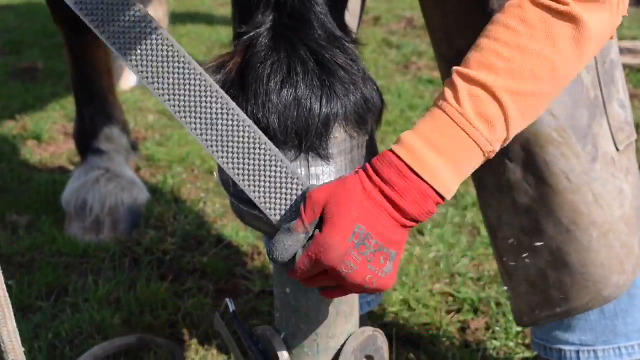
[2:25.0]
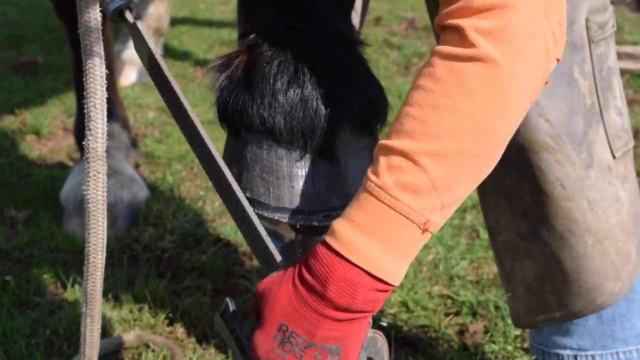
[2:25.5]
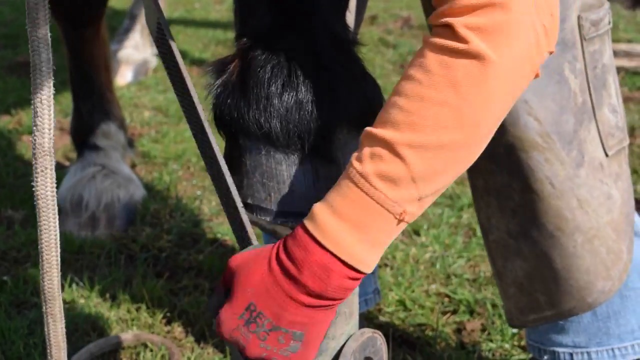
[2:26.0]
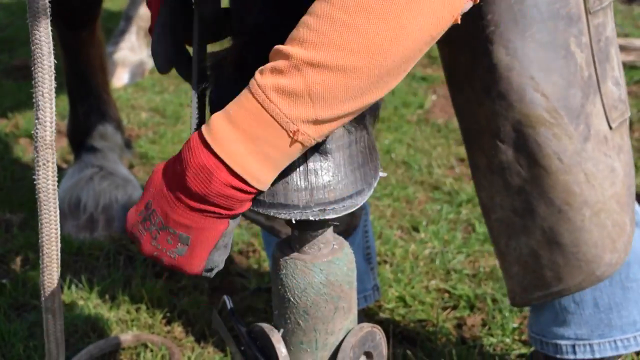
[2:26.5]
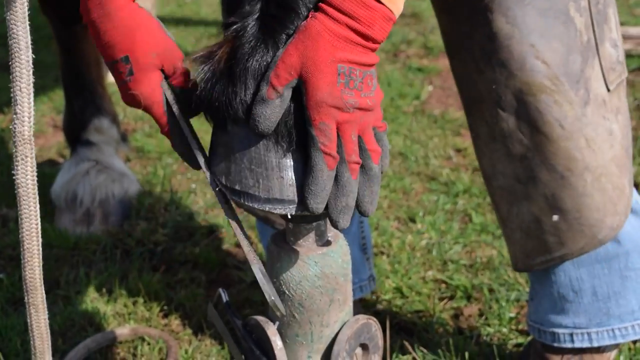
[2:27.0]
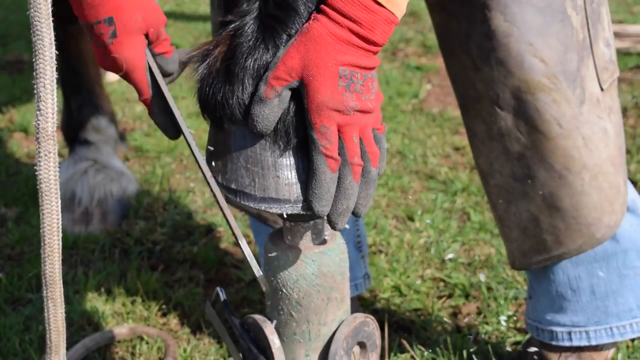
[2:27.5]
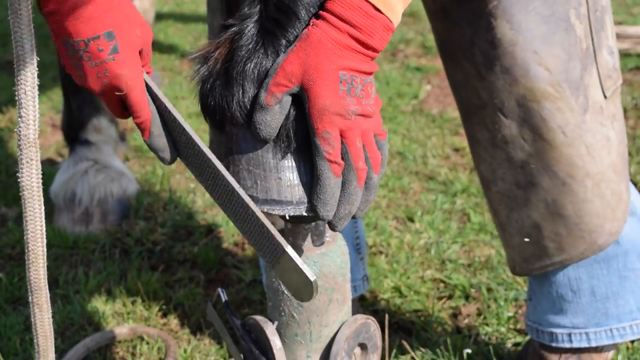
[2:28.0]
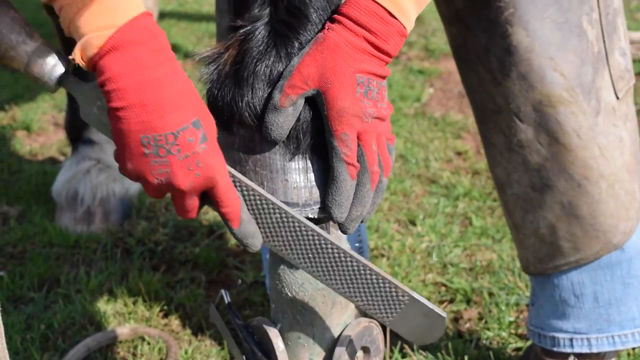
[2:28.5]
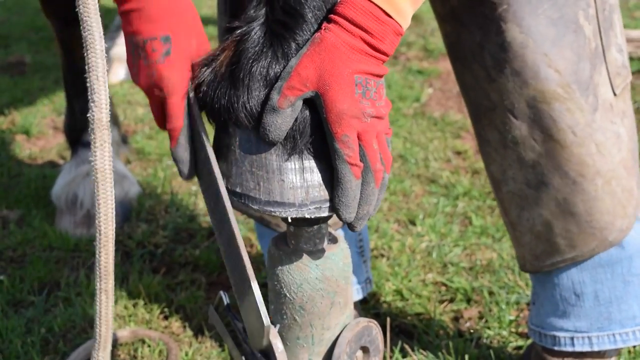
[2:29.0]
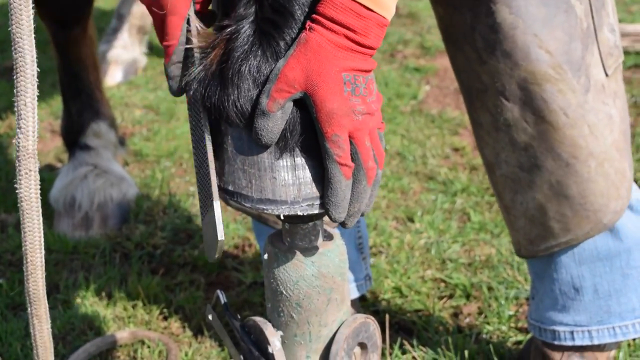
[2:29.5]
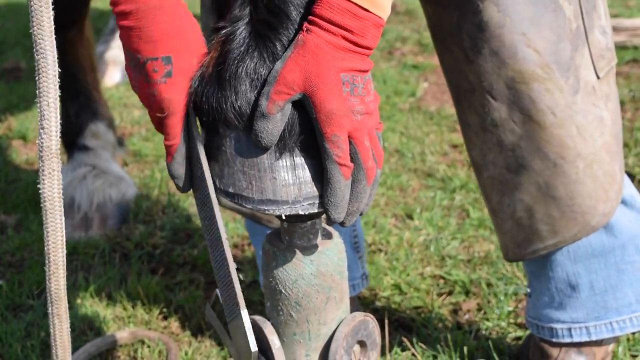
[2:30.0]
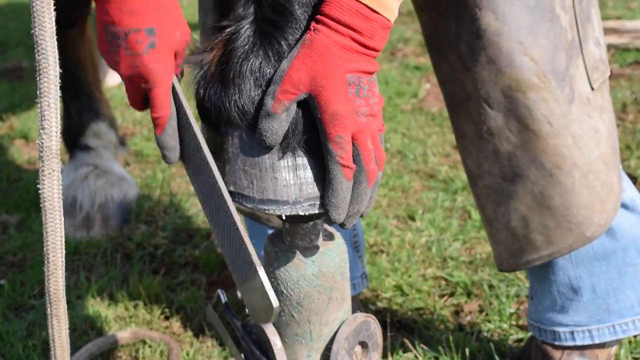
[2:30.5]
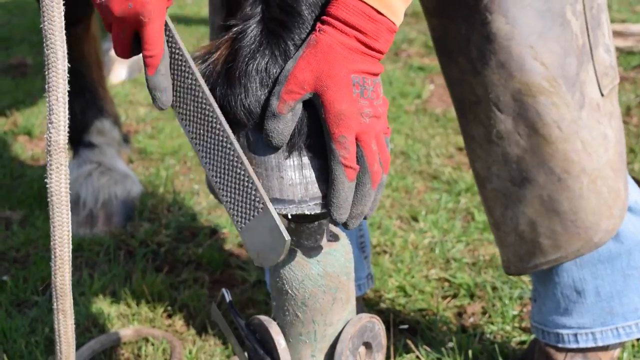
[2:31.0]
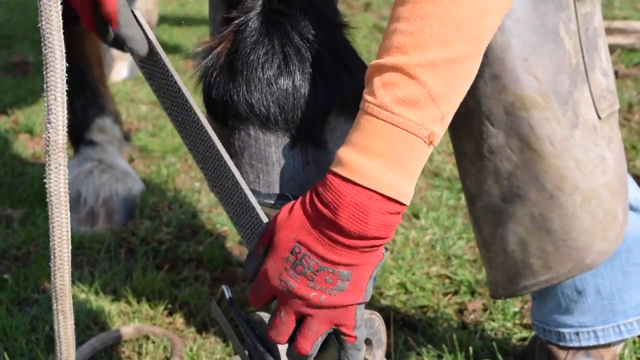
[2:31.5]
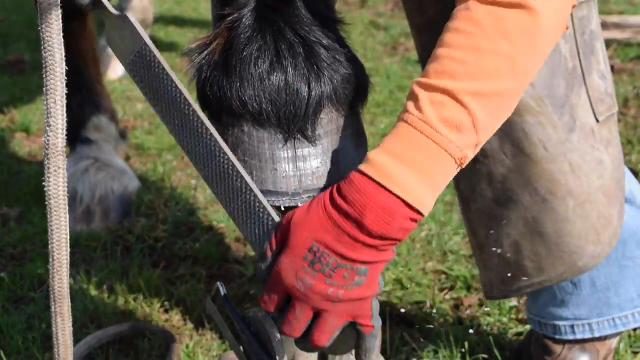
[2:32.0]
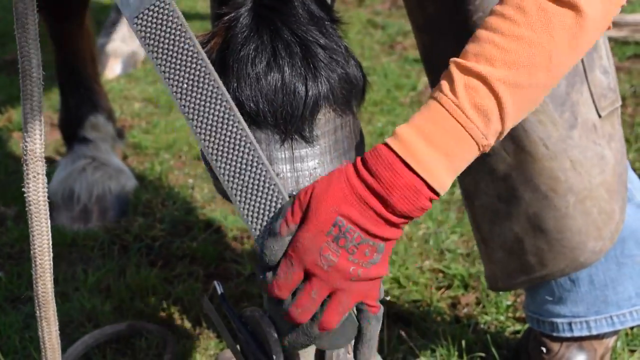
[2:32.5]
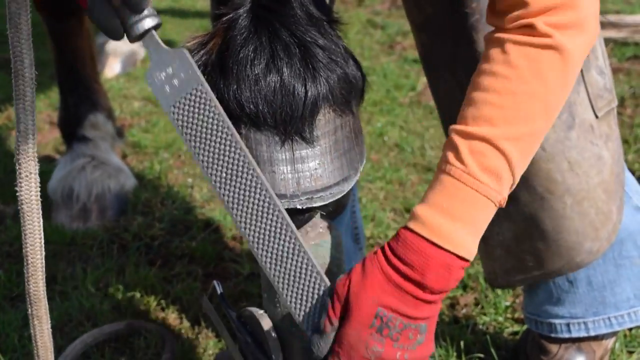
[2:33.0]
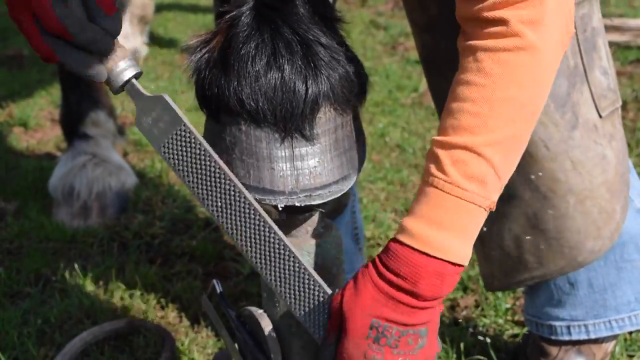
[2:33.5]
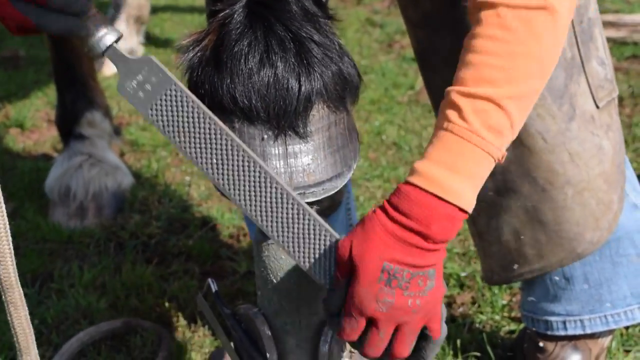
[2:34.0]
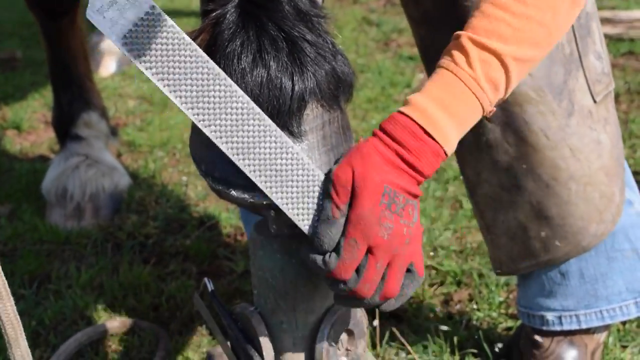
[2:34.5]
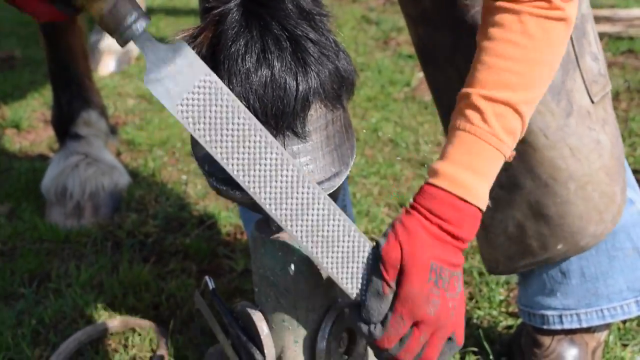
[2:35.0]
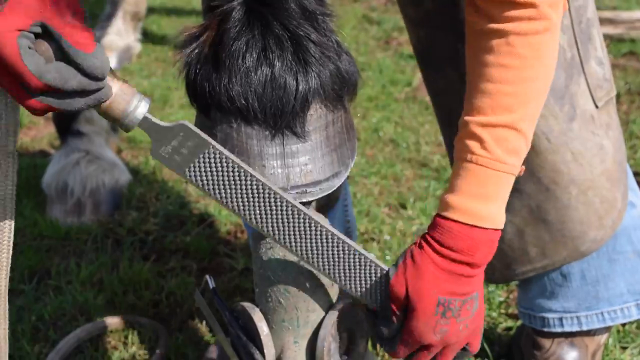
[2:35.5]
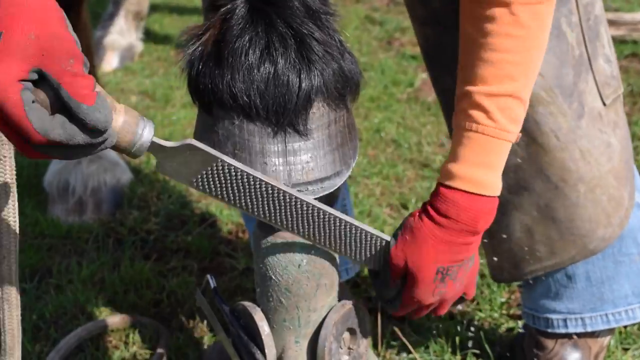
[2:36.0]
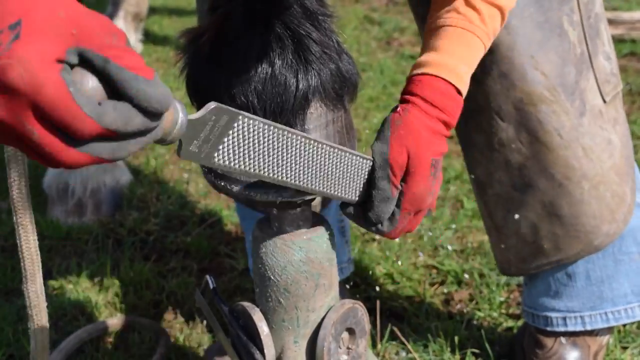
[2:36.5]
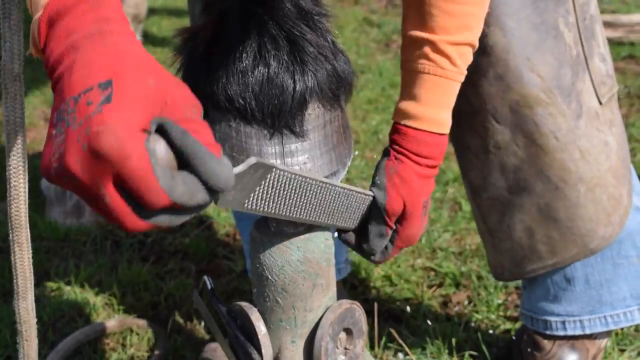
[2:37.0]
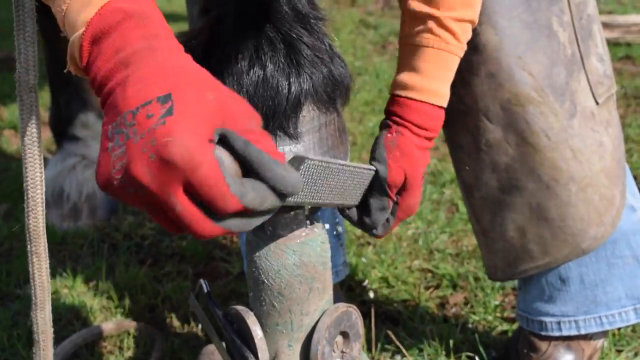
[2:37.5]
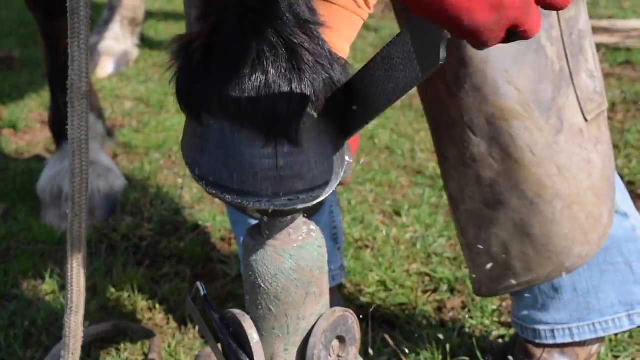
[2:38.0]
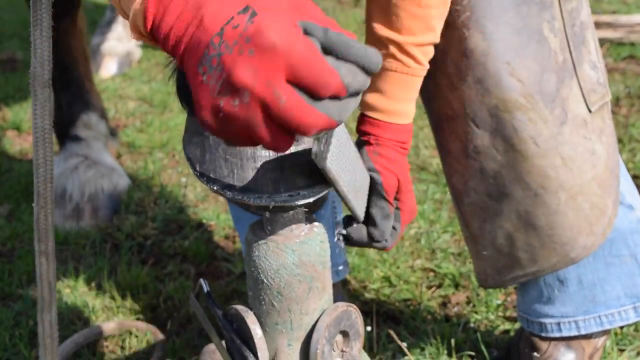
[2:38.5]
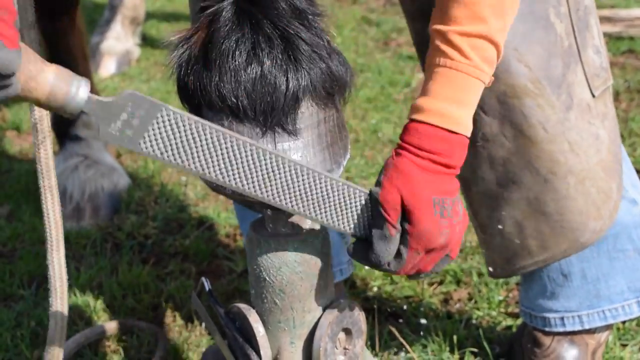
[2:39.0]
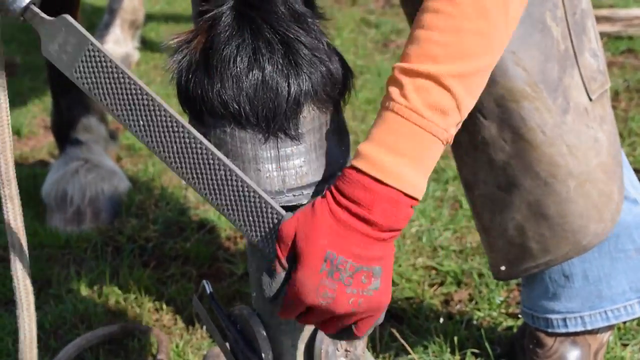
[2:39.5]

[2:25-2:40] With the horse's hoof still on top of the metal prop, she uses the same filing tool around the hoof, up and down, back and forth, side to side, maybe in a slight circular motion. She uses one hand, then switches to both hands; with one hand she seems to work a spot more vigorously, and with both she seems to slow down into a more circular motion. She takes the hoof into her left hand and files with her right while holding the hoof sturdy. The horse still has not moved. A white rope dangles from the left side, probably tying the horse up. She looks like she is wearing brown boots with her blue jeans, and the smock covers her jeans. On top of her gloves there are some black letters whose words cannot be made out.